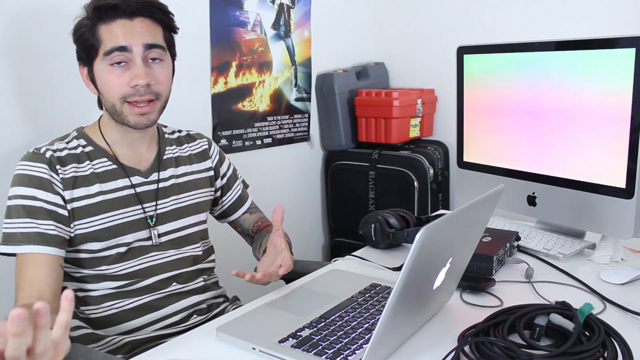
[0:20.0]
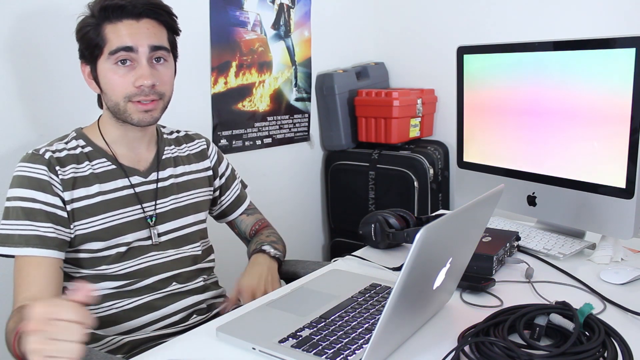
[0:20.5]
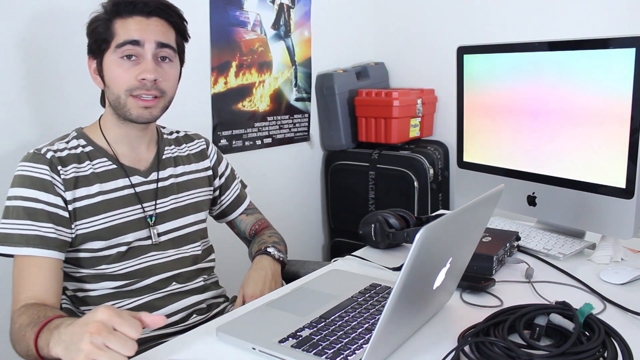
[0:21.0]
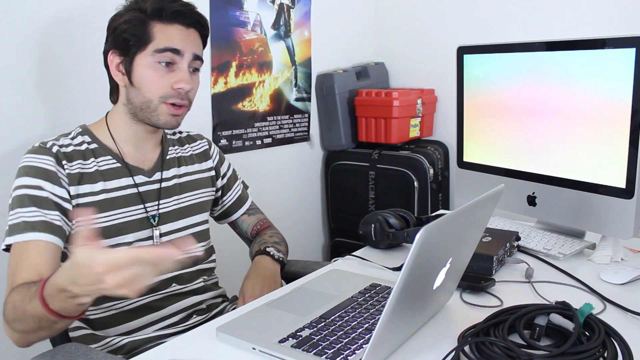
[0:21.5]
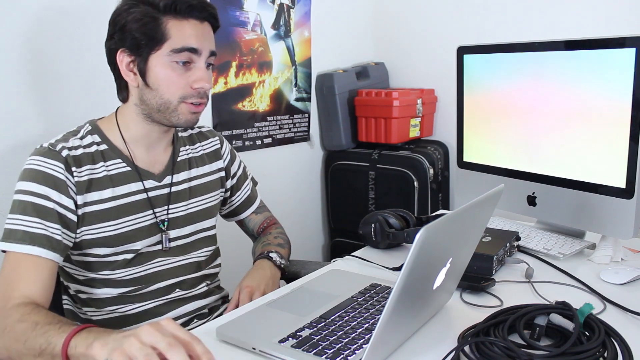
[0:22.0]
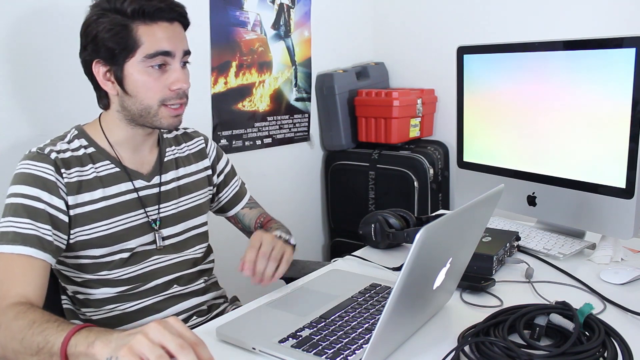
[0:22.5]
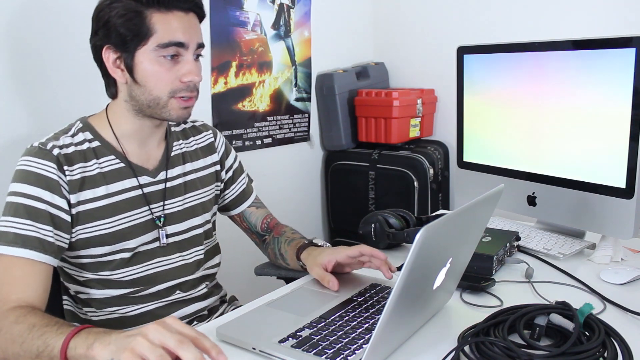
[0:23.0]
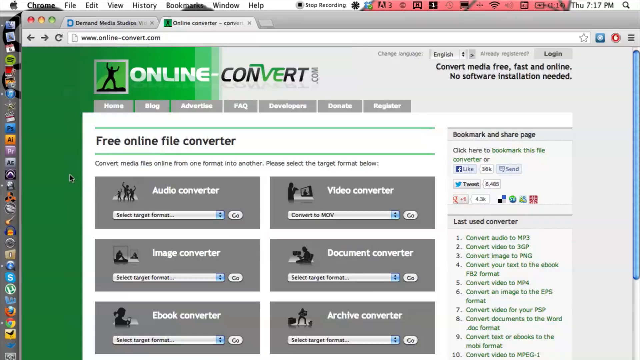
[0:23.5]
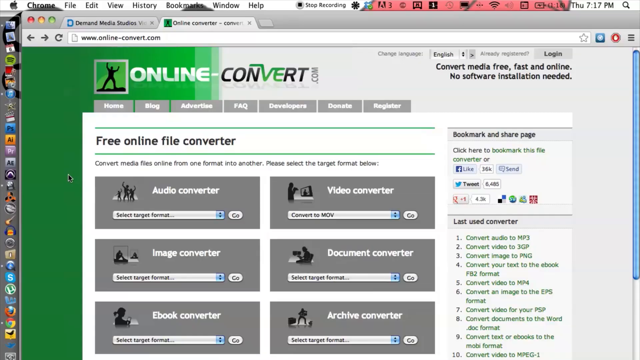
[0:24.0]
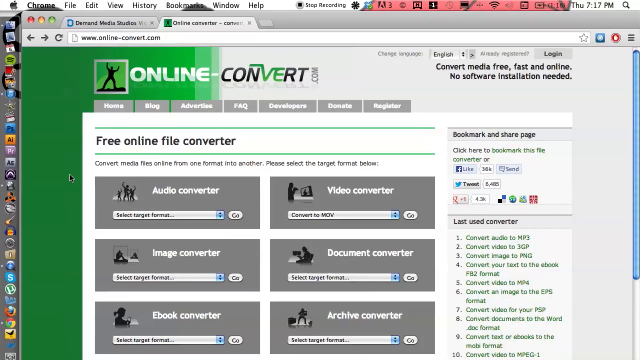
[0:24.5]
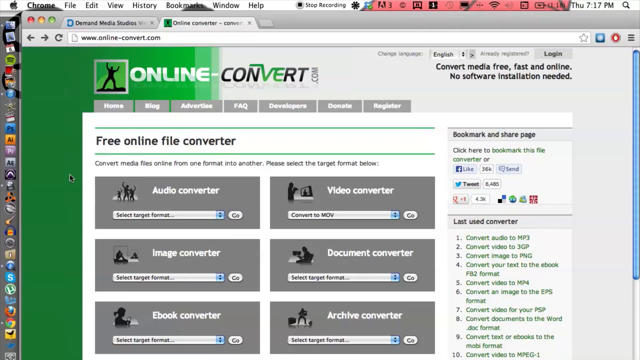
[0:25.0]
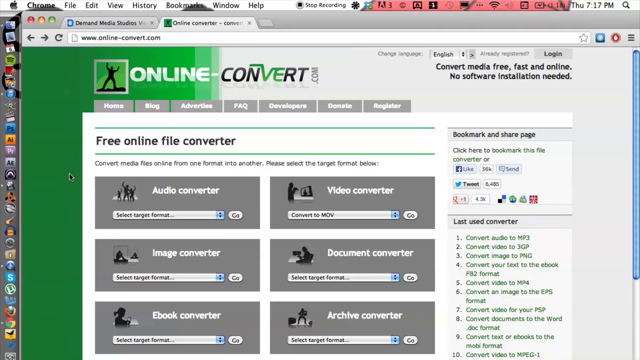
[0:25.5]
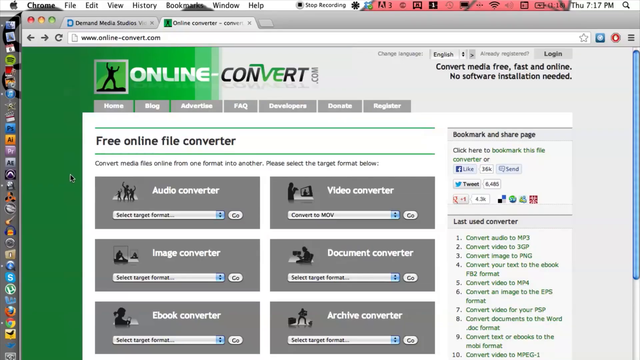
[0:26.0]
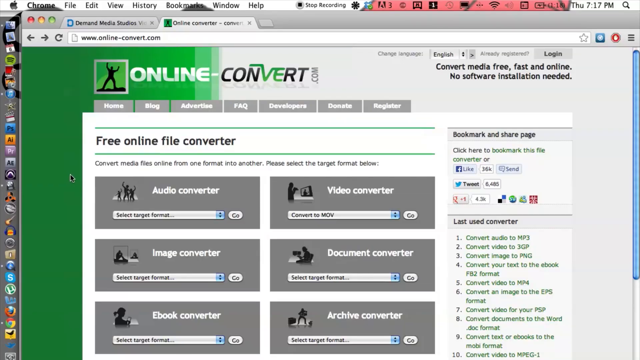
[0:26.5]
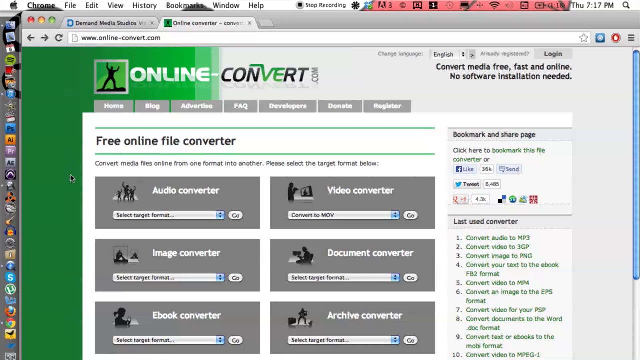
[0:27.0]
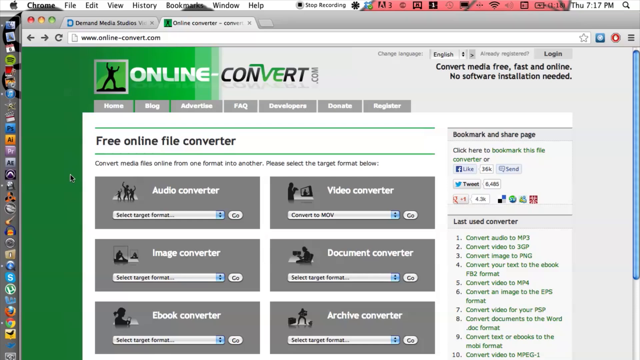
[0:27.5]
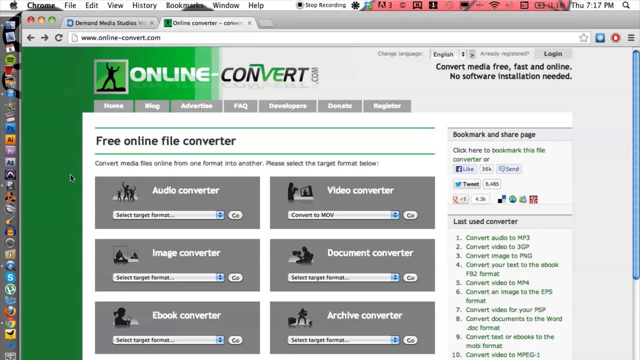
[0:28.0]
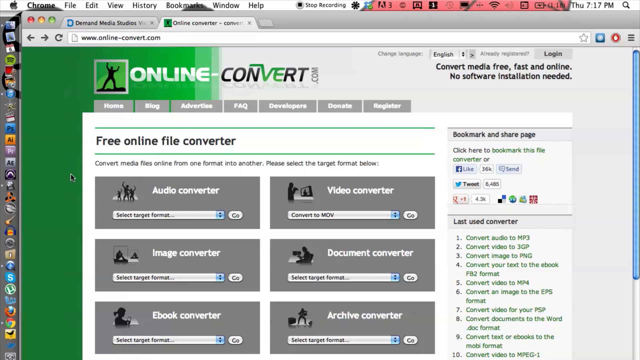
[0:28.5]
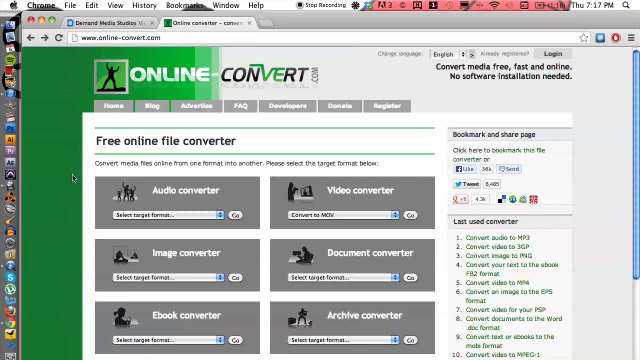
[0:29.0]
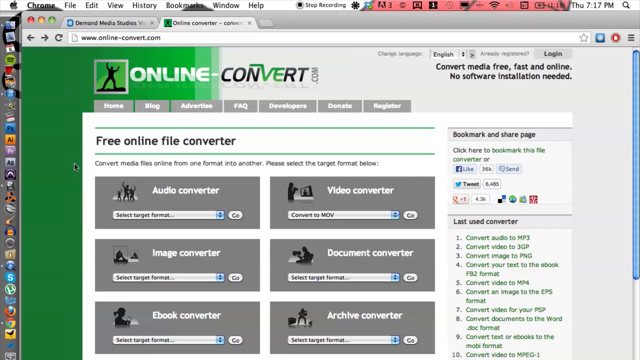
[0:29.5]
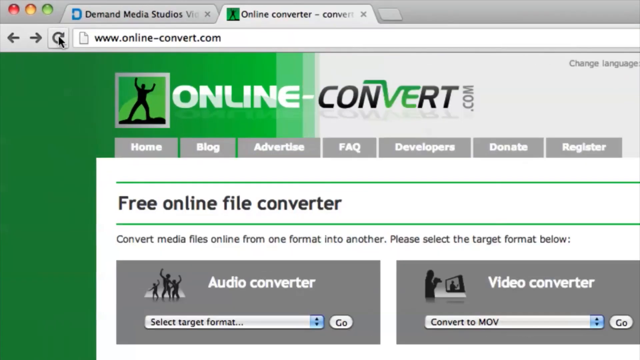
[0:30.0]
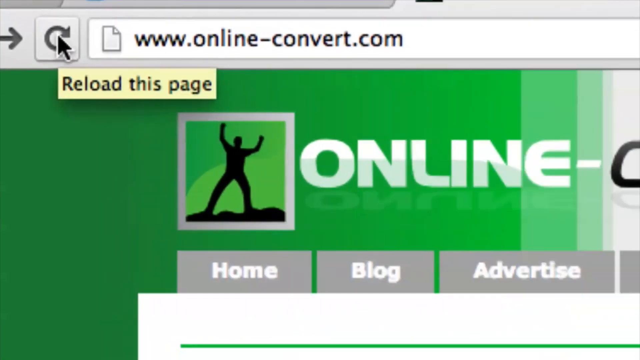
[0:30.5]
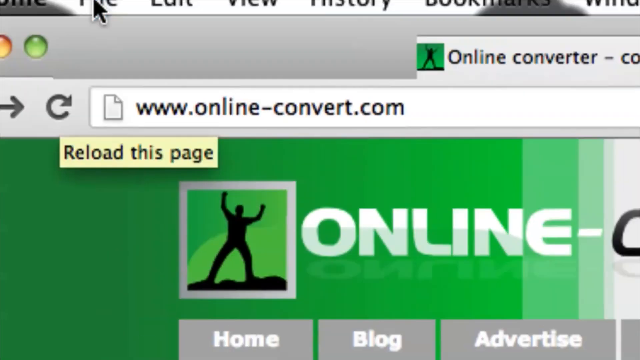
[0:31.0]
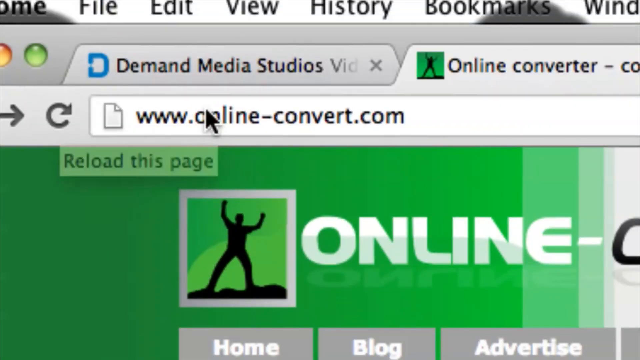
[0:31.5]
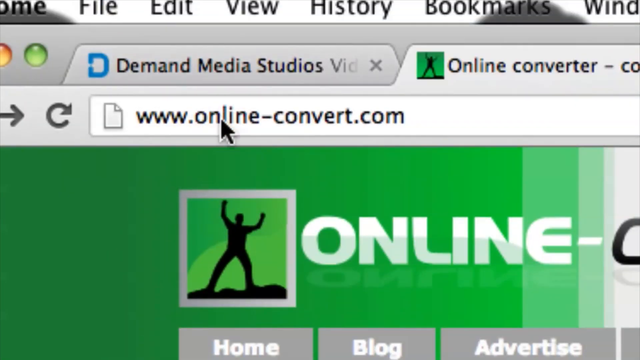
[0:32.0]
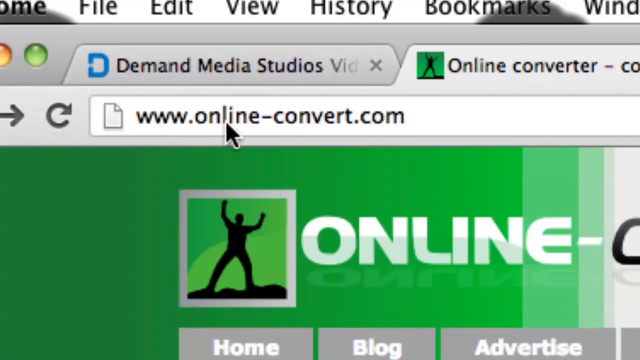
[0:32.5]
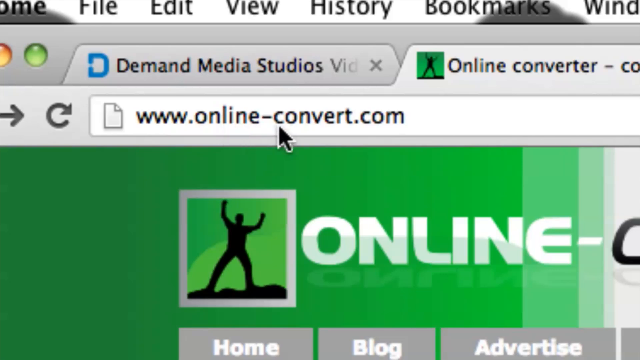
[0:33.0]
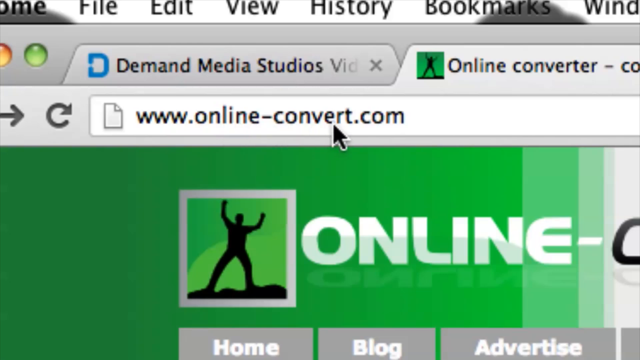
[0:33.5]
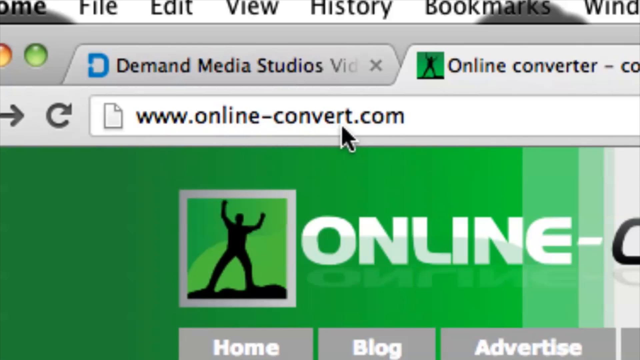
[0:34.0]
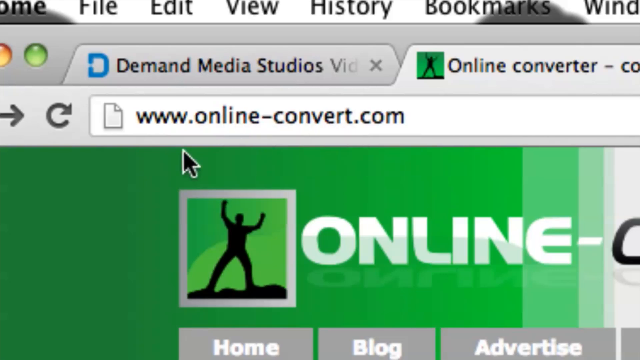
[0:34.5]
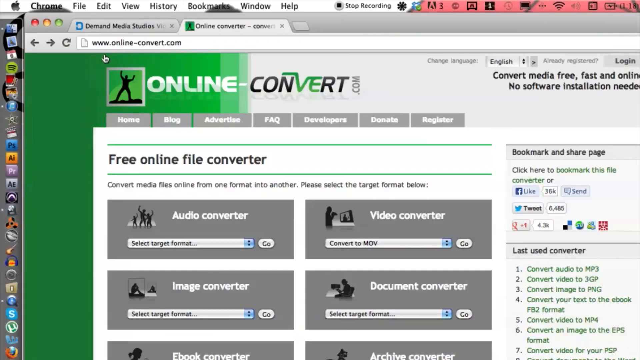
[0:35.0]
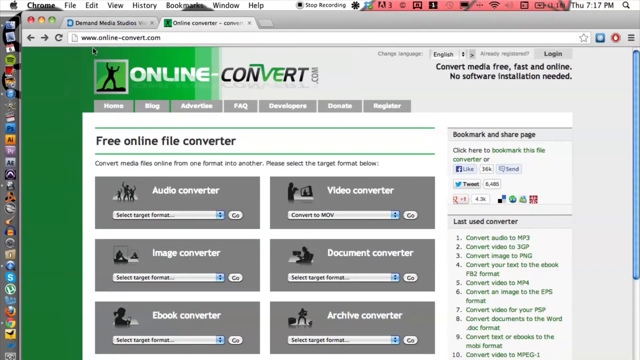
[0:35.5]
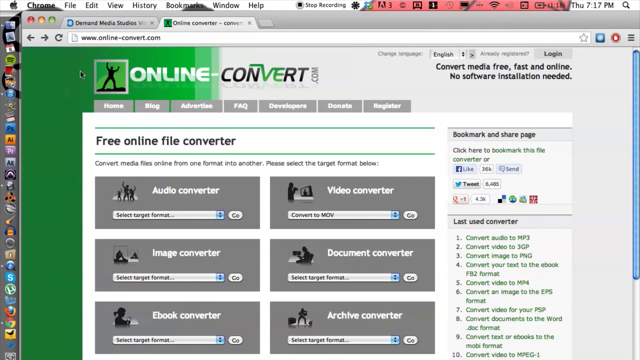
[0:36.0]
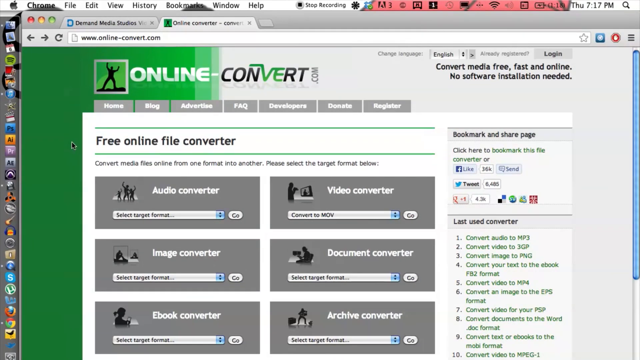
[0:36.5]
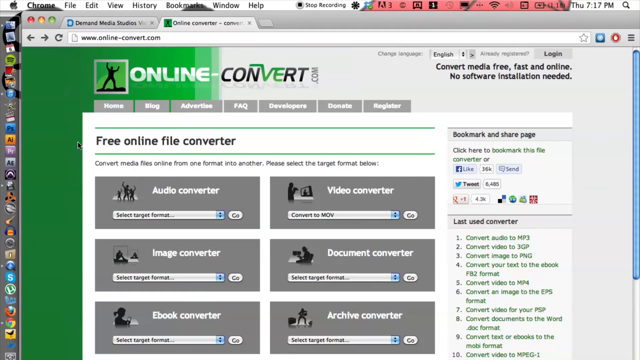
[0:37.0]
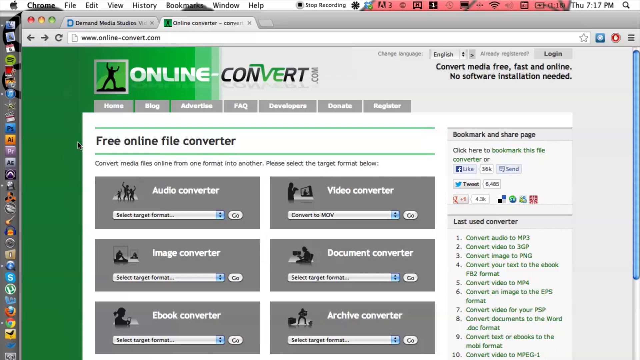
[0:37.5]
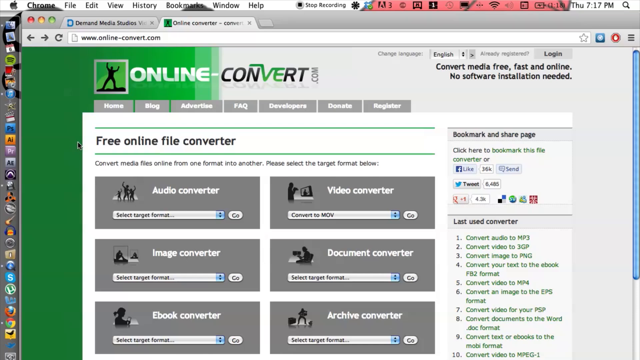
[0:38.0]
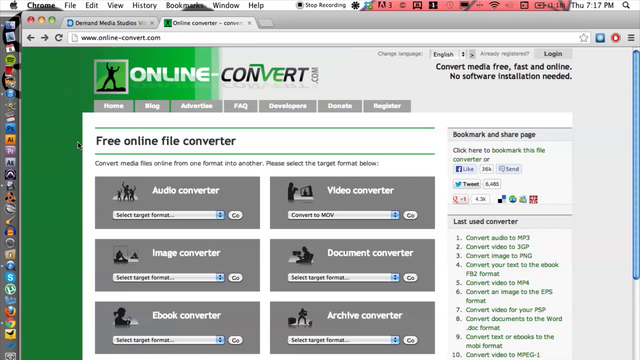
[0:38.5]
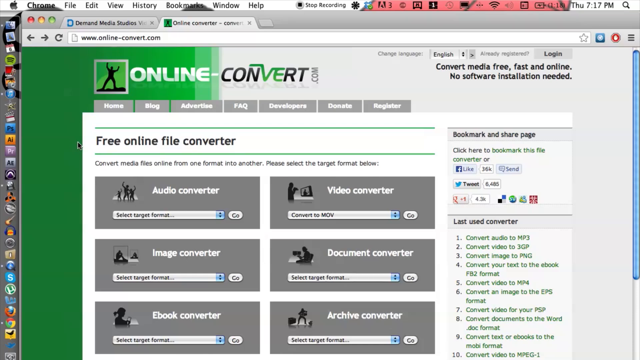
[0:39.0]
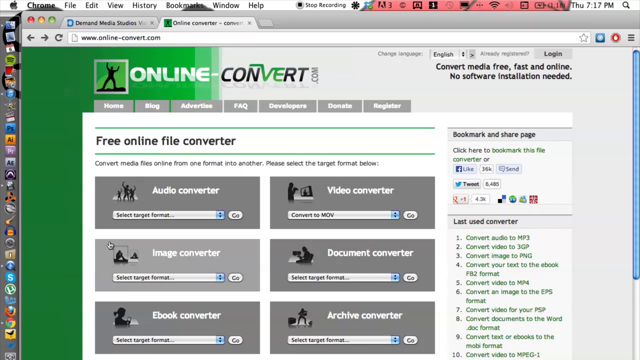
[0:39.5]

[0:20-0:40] A man looks at his laptop, which shows the website onlineconvert.com, presenting a "free online file converter." He scrolls over to the URL, which reads "www.online-convert.com." The man is in his room, talking casually. He wears a casual shirt with brown and white stripes and has black hair, and he seems very relaxed.